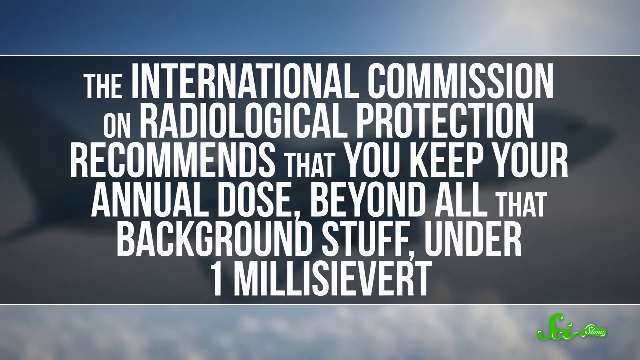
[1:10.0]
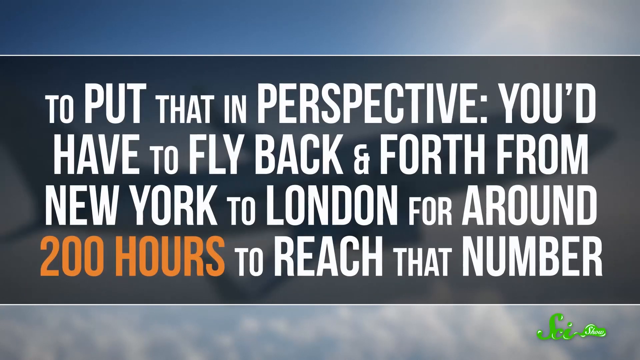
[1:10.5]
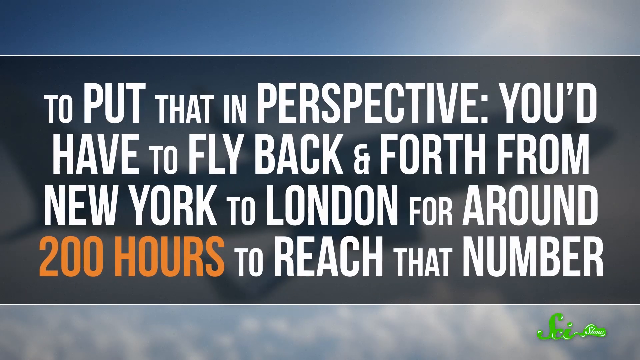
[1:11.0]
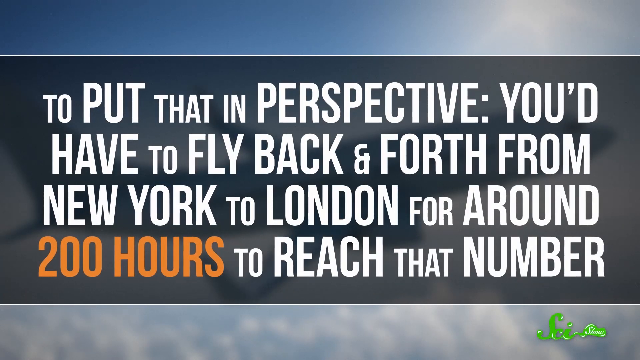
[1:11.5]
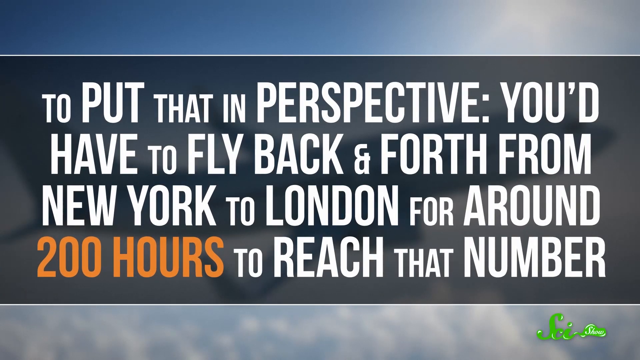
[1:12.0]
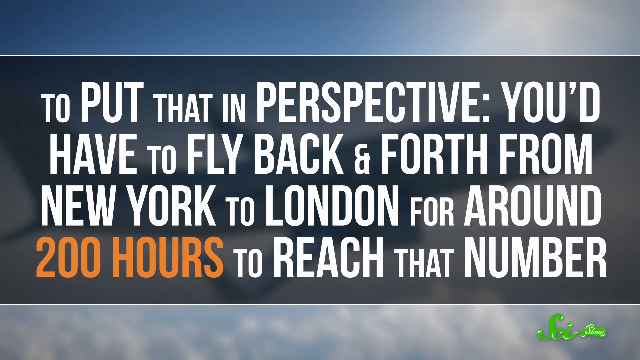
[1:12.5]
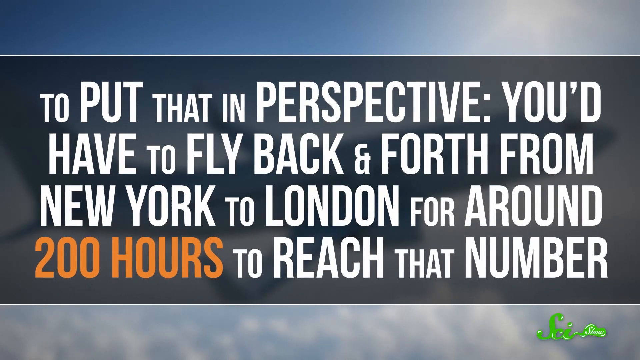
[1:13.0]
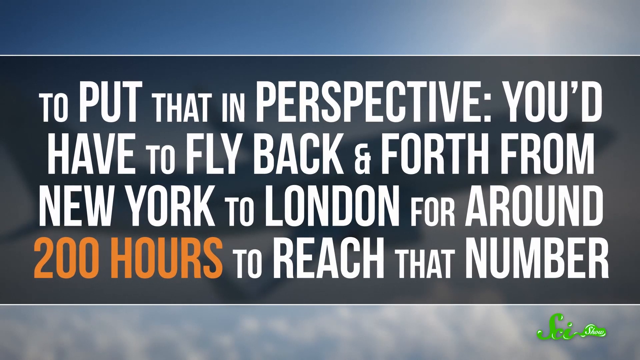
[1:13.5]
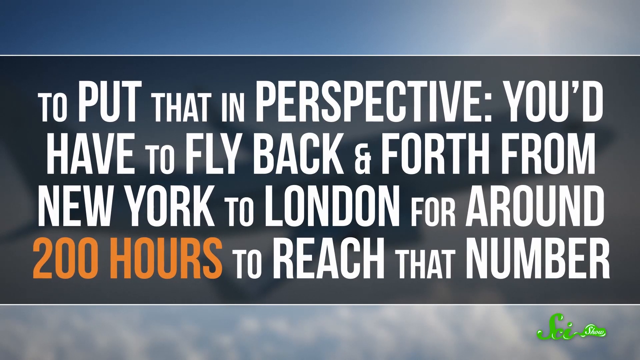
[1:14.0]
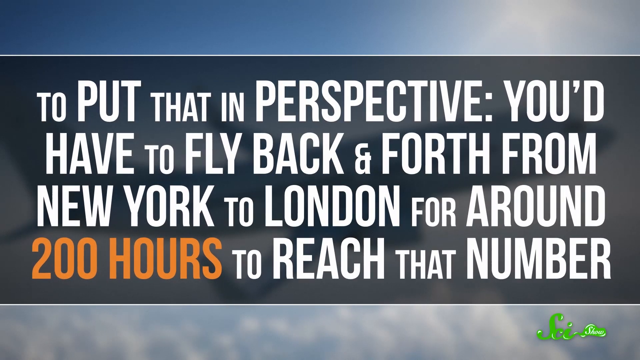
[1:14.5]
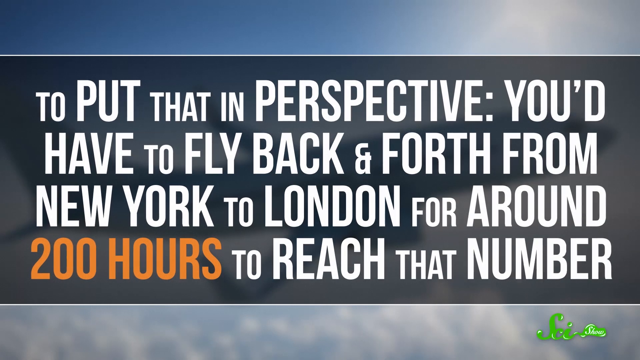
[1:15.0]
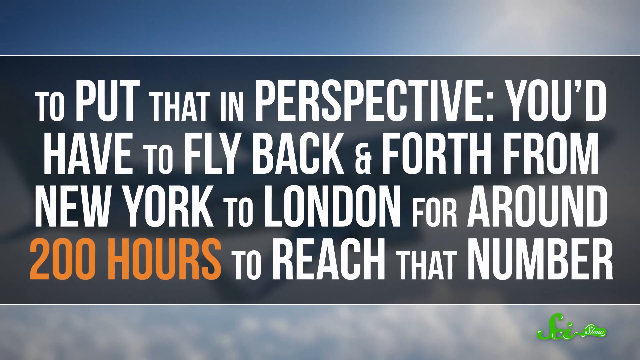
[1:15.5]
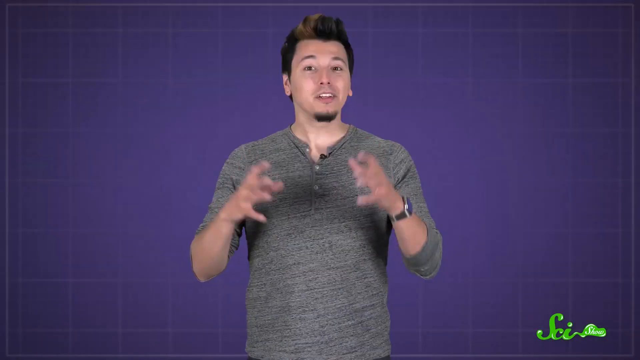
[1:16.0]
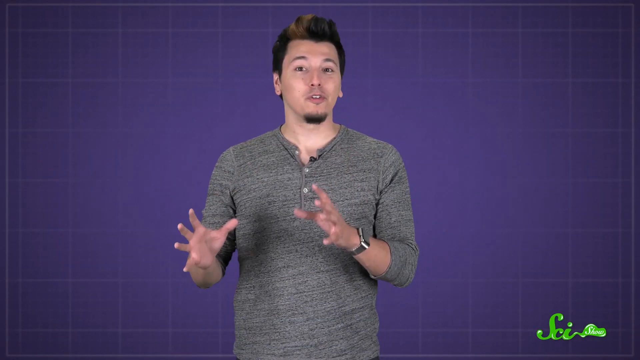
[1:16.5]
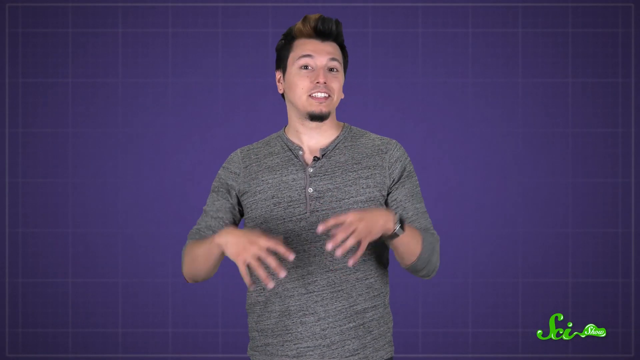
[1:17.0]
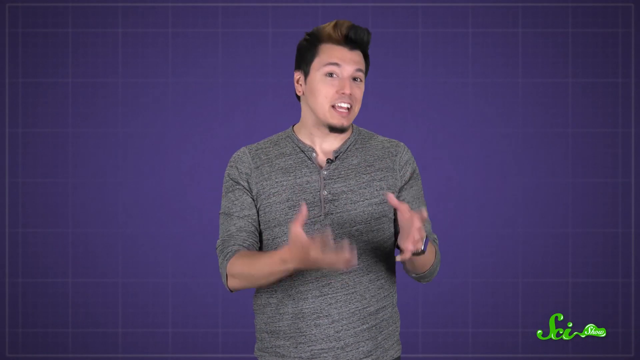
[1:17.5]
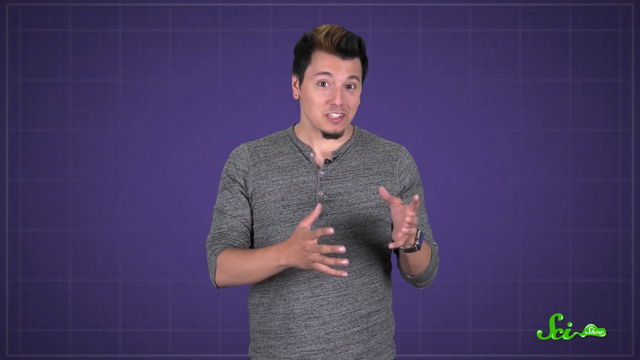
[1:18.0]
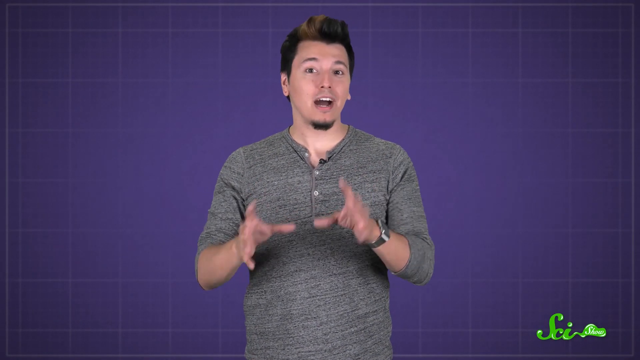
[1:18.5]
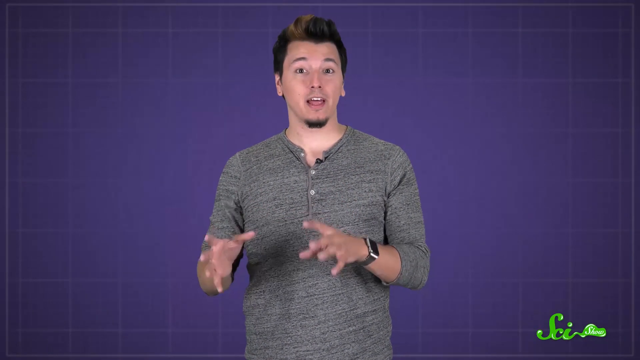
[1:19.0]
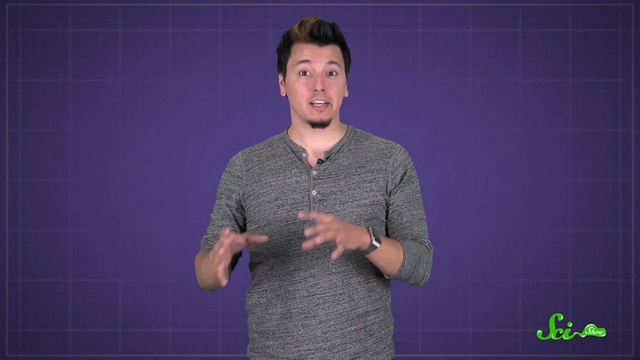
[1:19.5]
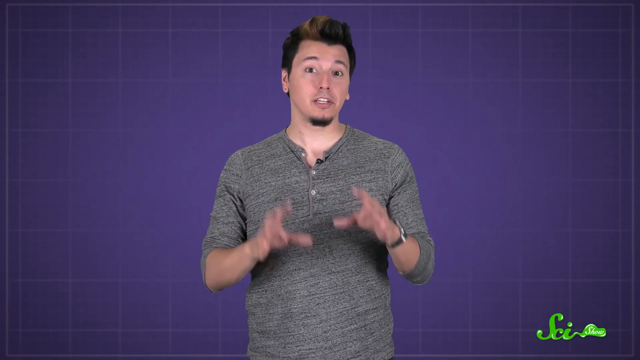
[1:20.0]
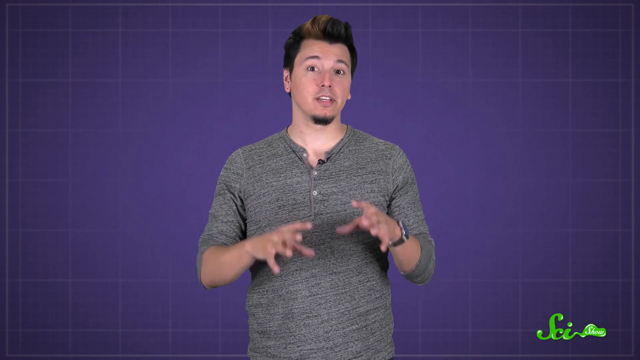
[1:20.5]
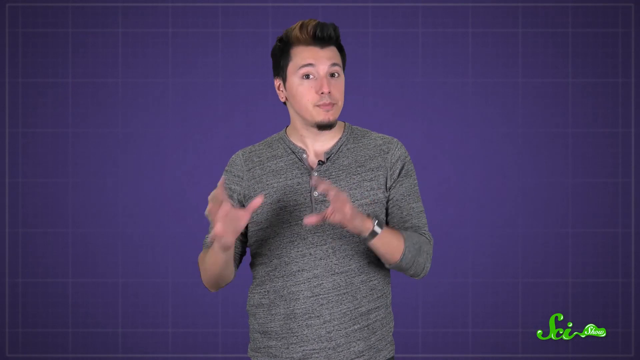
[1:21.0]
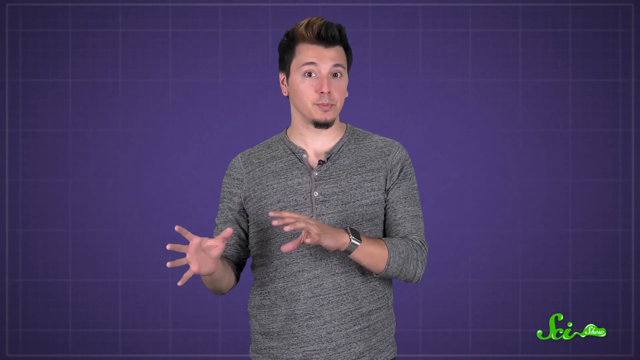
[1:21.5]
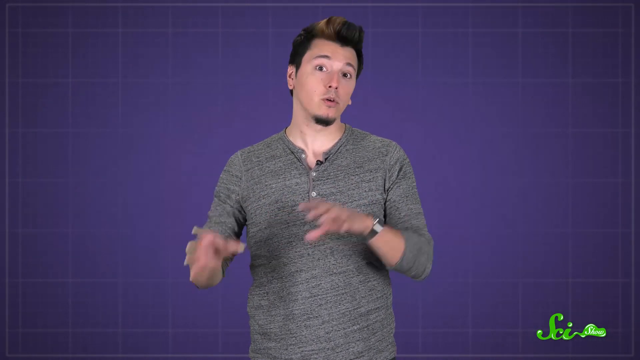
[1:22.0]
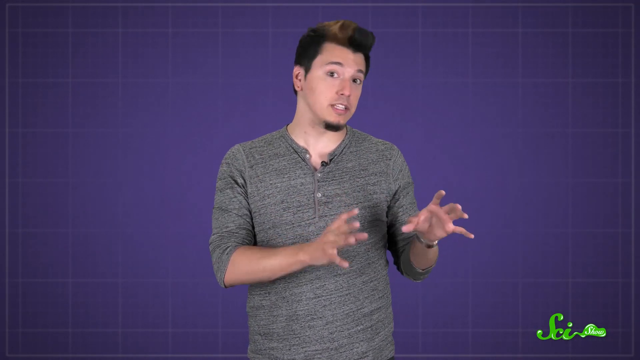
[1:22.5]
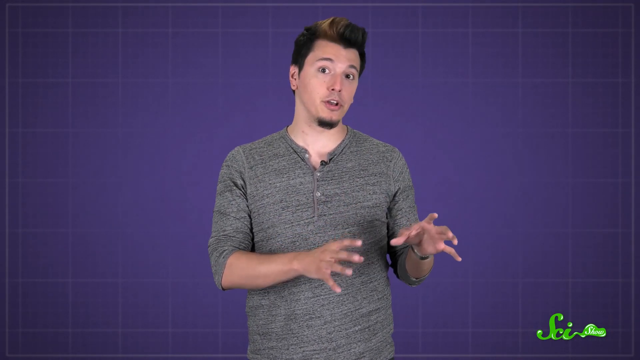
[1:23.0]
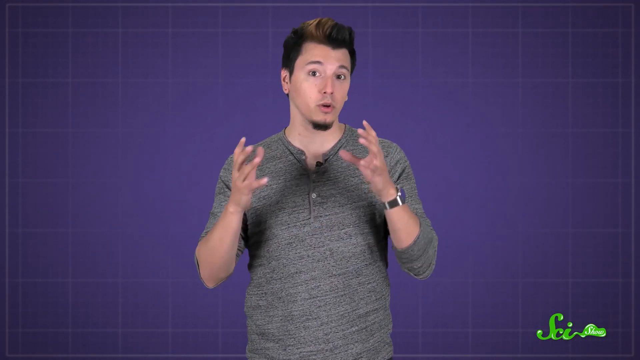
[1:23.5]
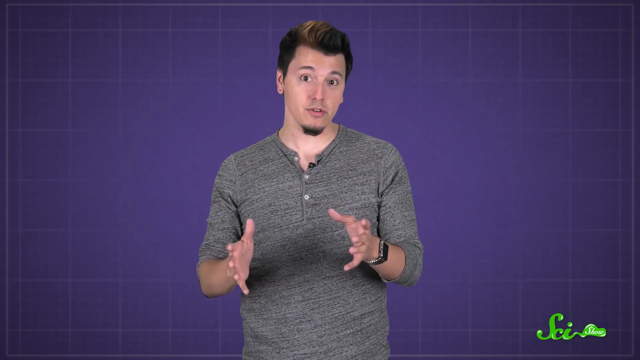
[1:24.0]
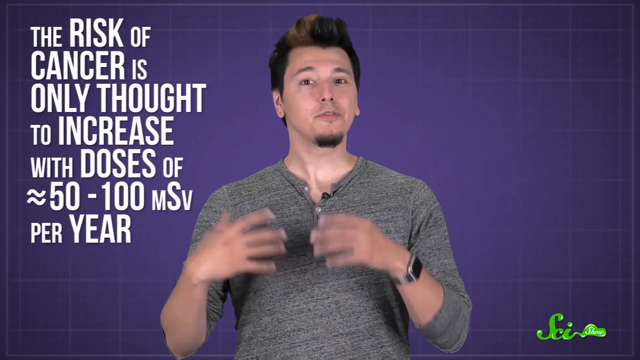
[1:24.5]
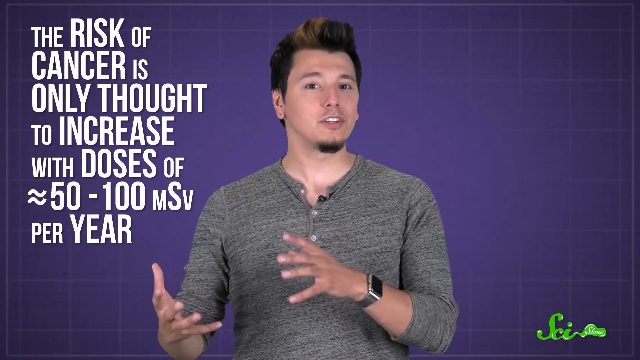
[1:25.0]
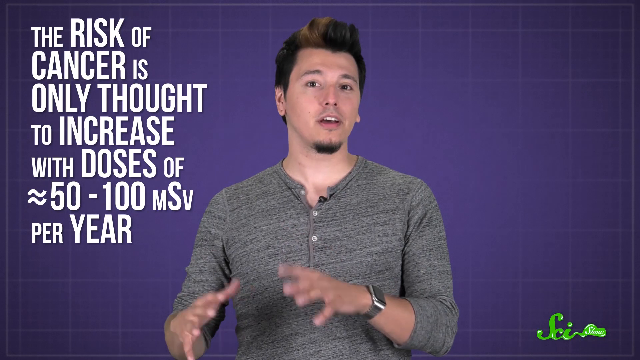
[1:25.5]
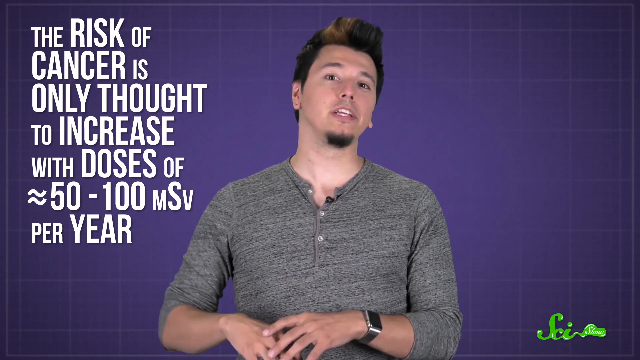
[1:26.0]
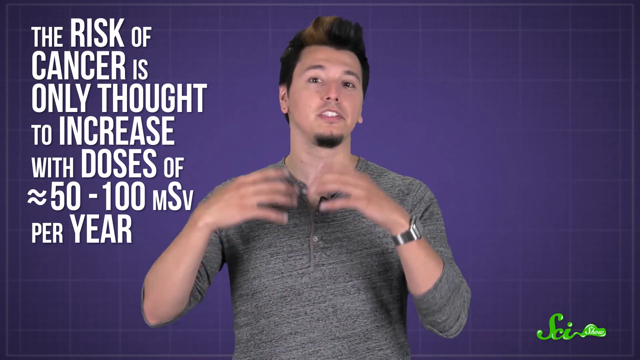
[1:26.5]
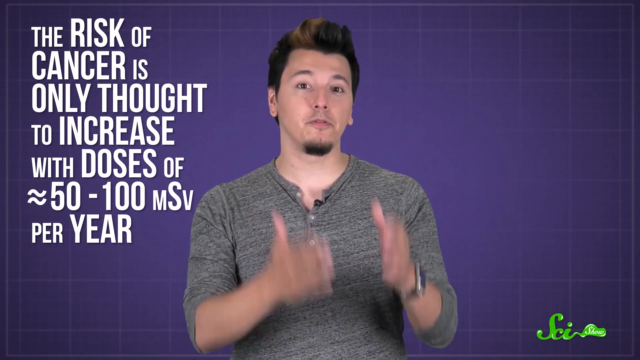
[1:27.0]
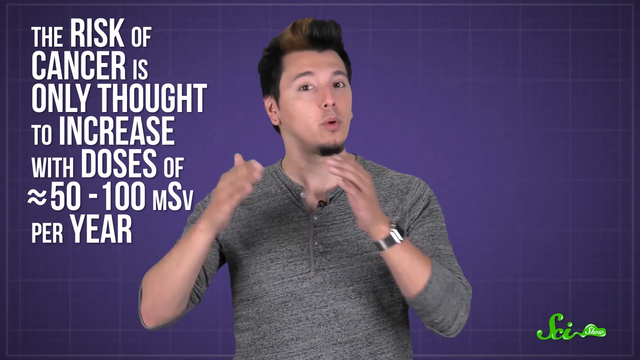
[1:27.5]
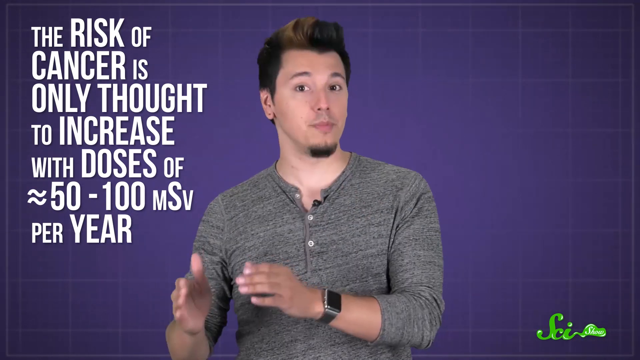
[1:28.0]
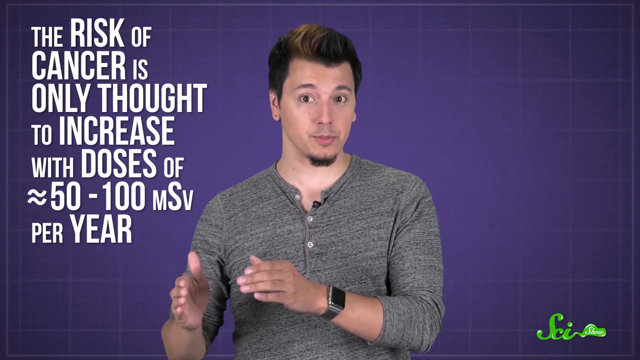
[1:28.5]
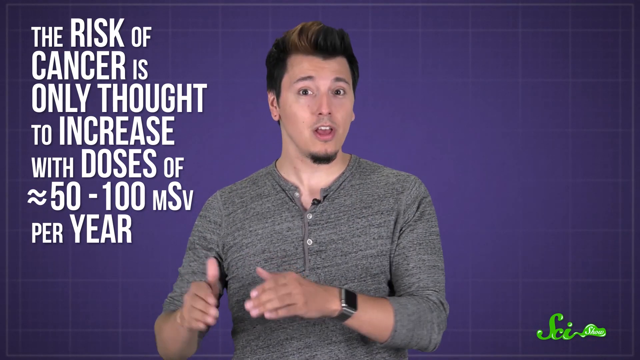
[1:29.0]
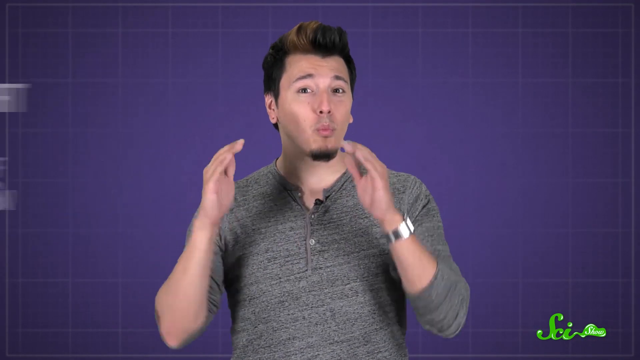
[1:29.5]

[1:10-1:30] The statement from the International Commission on Radiological Protection stays on screen briefly, then quickly moves out of sight. It is replaced by a new statement in the large grayish central text bar in front of a bluish-white background, dominating the screen: "To put that in perspective, you'd have to fly back and forth from New York to London for around 200 hours to reach that number". The phrase "200 hours" is highlighted in orange. After a brief time the video returns to the narrator, standing and speaking, seen from the waist up. His hands are in front of him, moving in unison, sometimes to the left and sometimes to the right. As he talks, new text appears superimposed on the screen to his right in large white letters: "The risk of cancer is only thought to increase with doses of almost equal to 50 to 100 mSv per year".